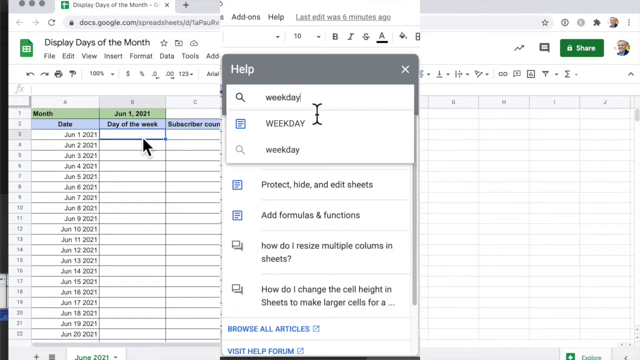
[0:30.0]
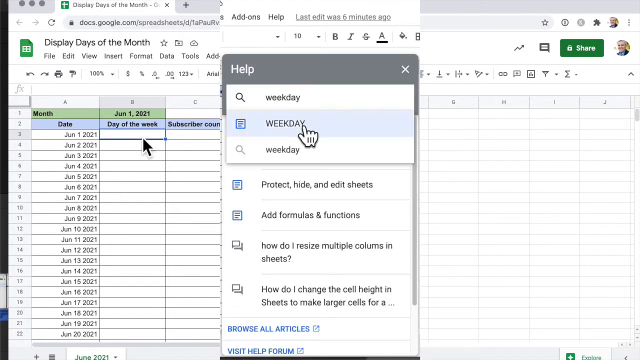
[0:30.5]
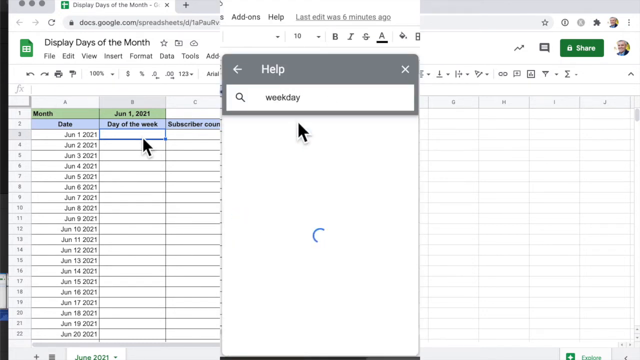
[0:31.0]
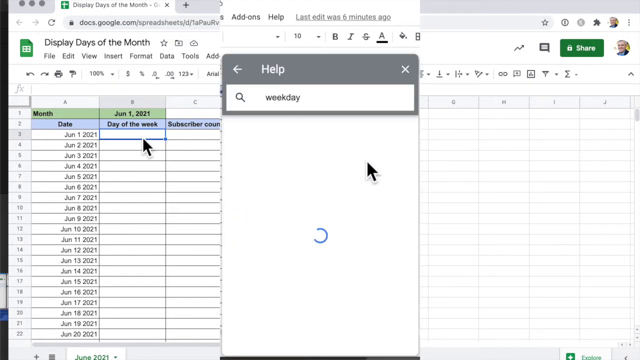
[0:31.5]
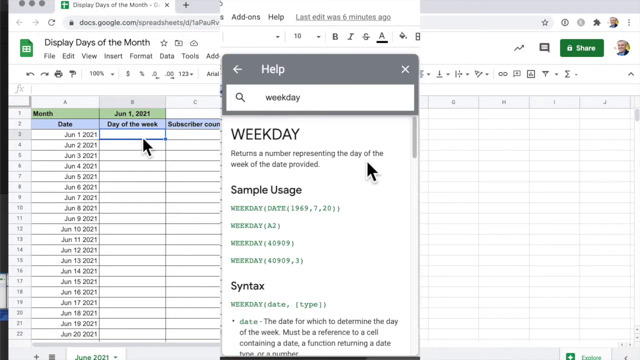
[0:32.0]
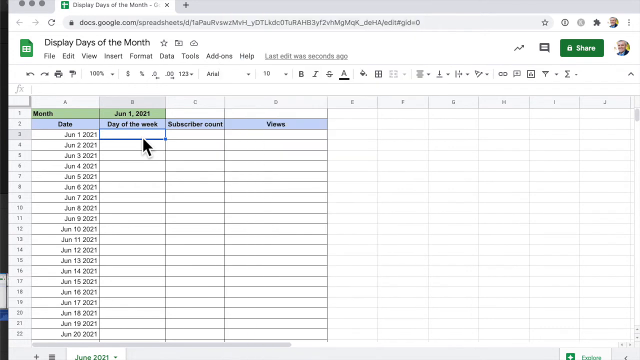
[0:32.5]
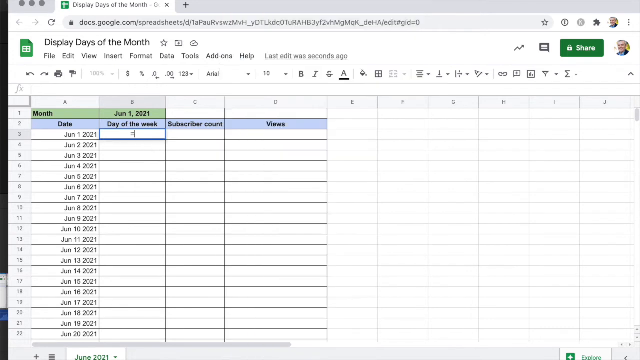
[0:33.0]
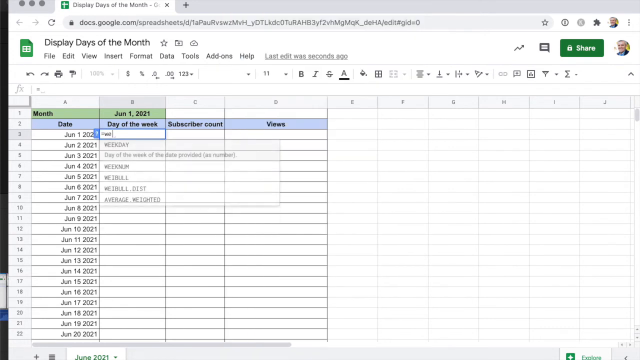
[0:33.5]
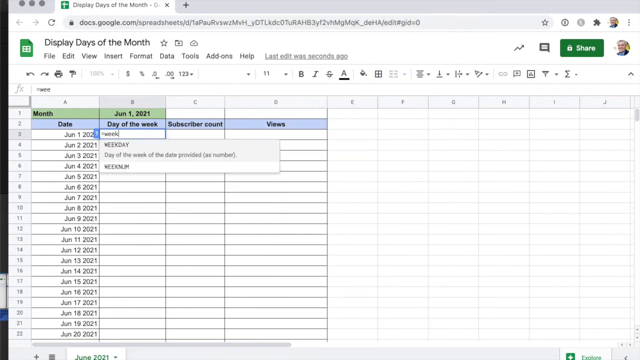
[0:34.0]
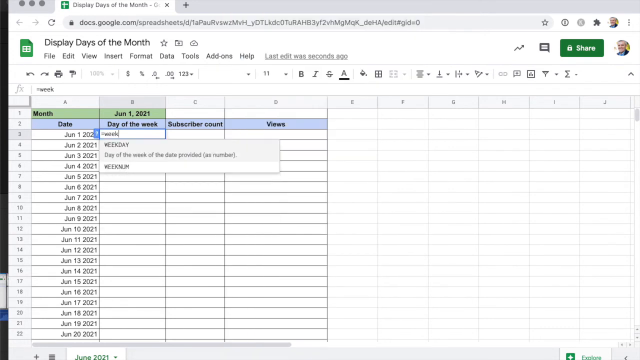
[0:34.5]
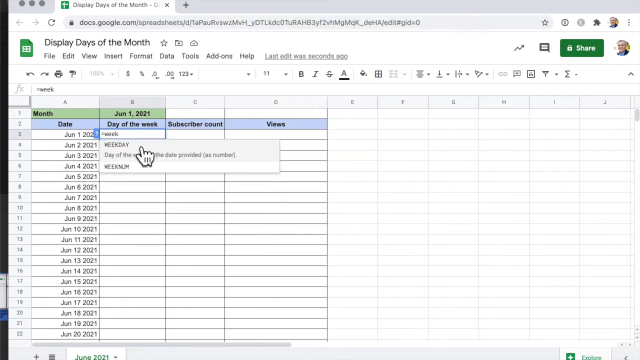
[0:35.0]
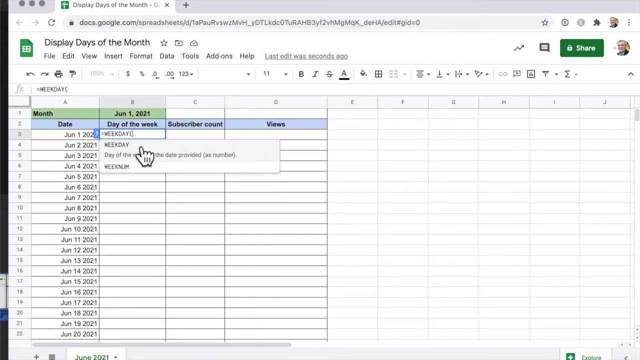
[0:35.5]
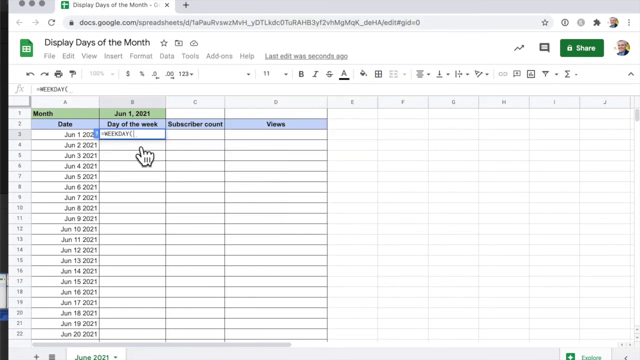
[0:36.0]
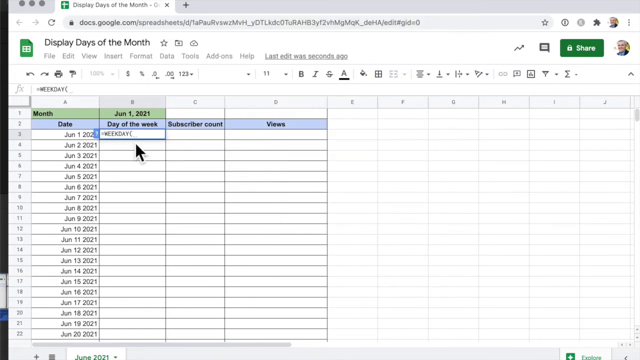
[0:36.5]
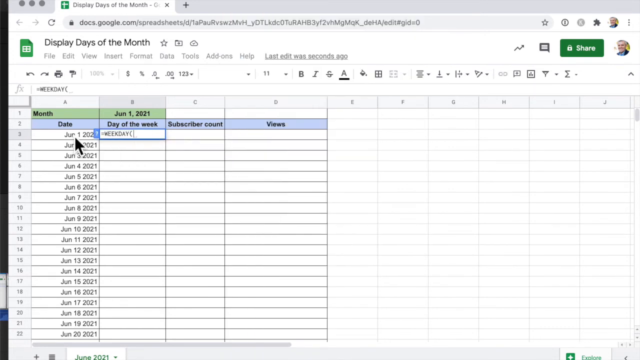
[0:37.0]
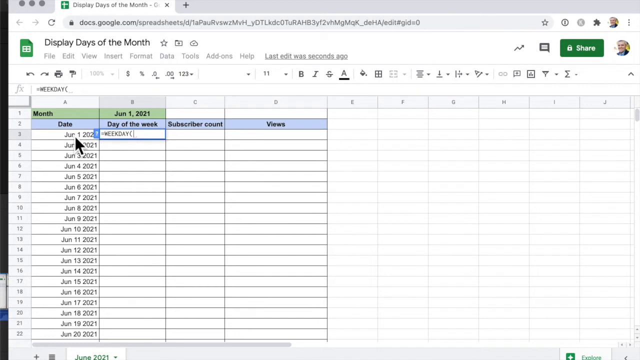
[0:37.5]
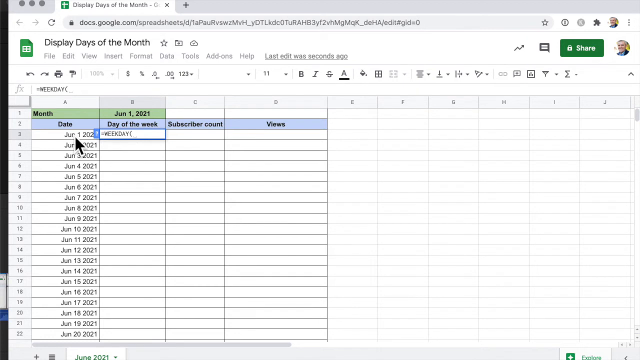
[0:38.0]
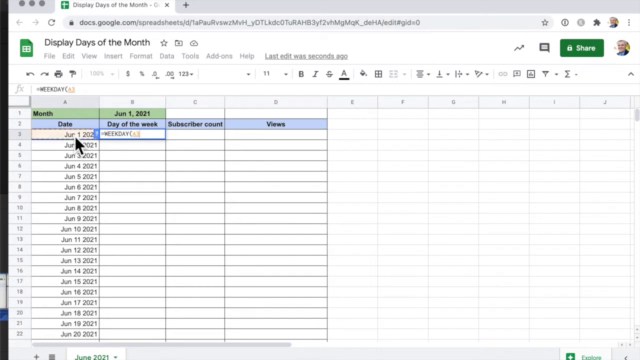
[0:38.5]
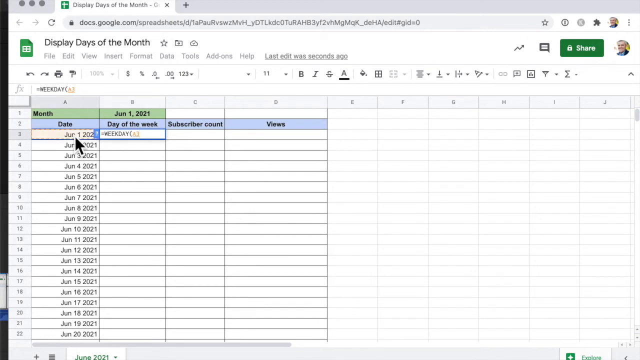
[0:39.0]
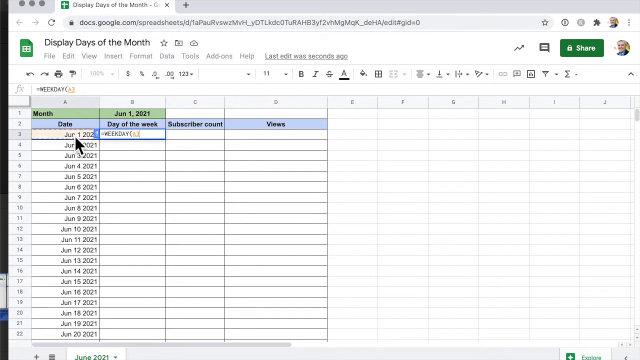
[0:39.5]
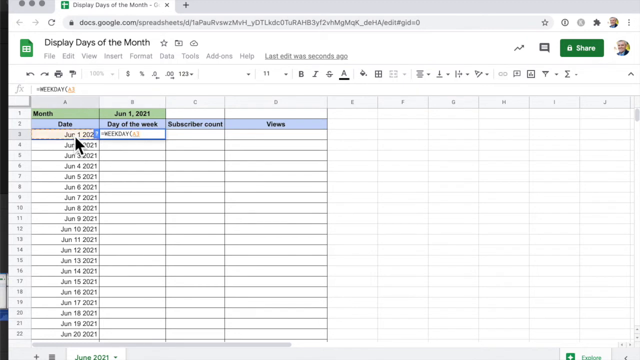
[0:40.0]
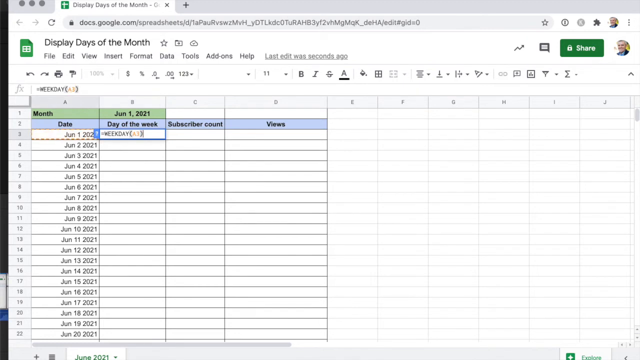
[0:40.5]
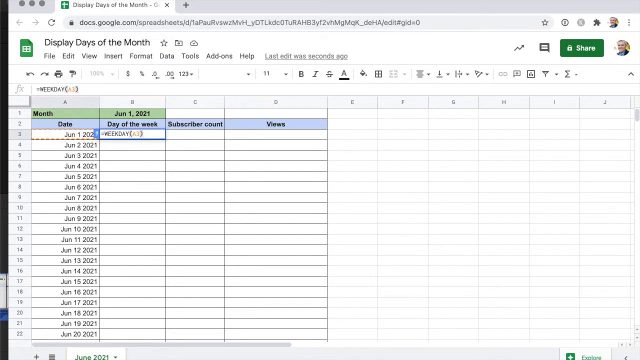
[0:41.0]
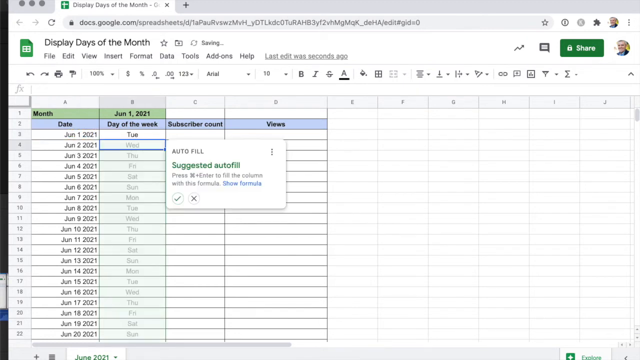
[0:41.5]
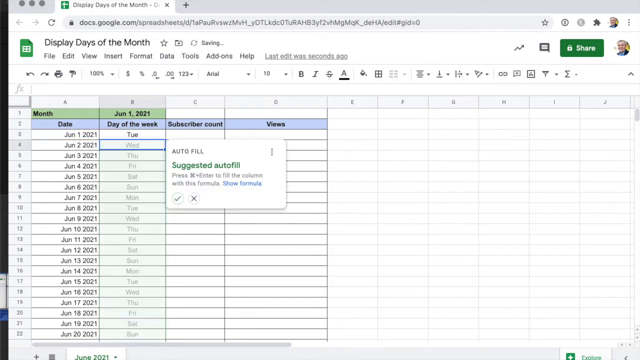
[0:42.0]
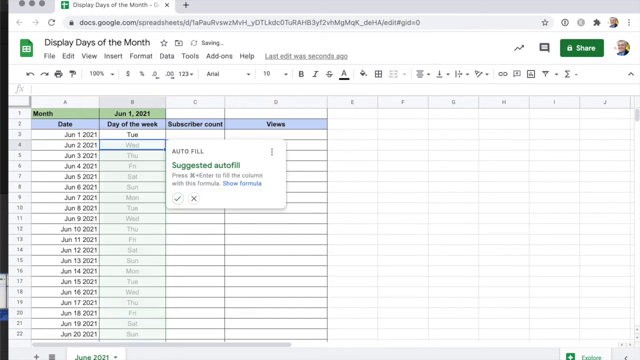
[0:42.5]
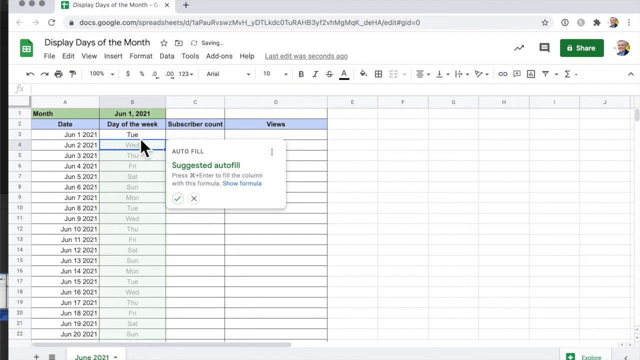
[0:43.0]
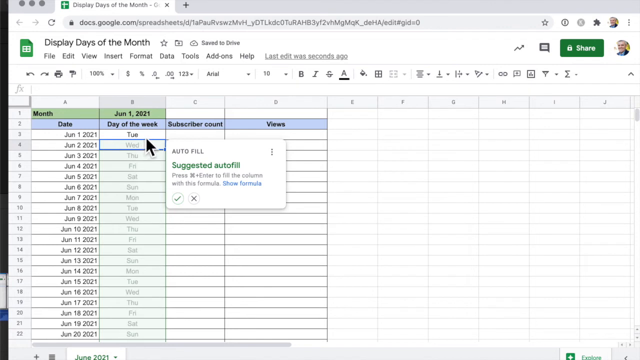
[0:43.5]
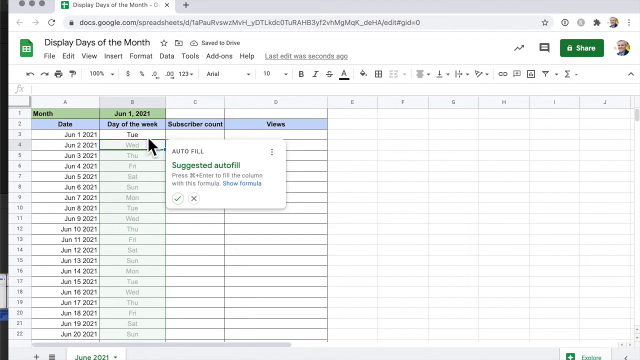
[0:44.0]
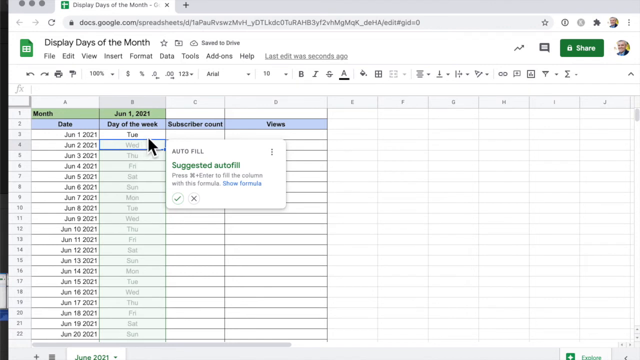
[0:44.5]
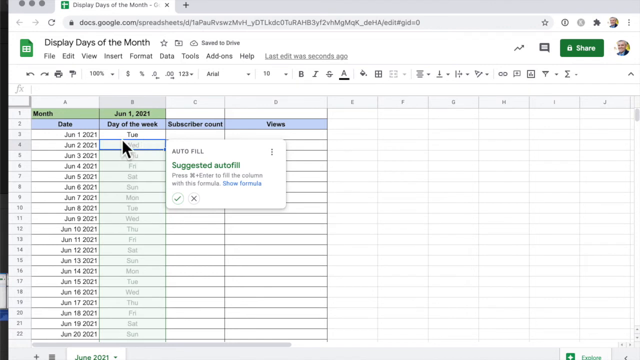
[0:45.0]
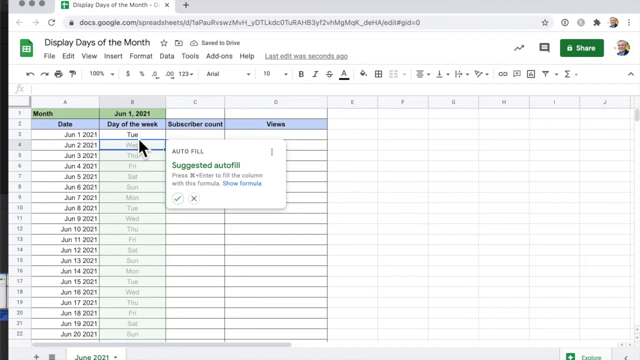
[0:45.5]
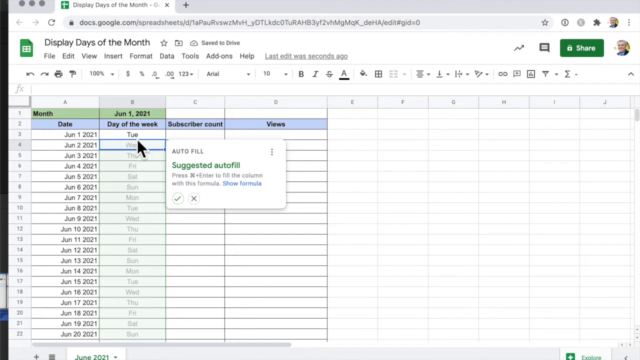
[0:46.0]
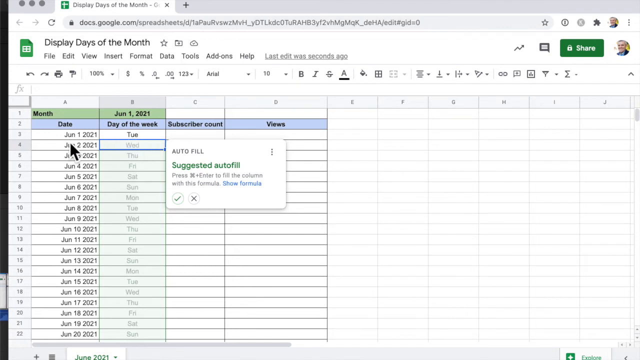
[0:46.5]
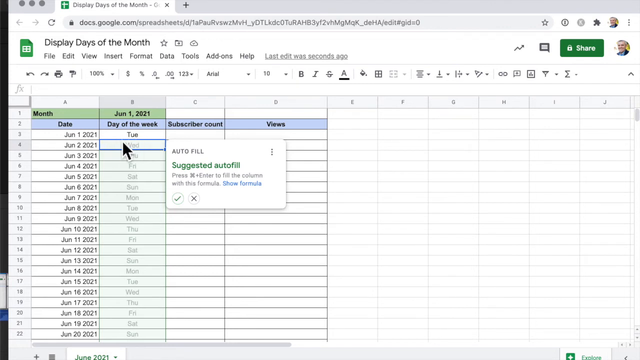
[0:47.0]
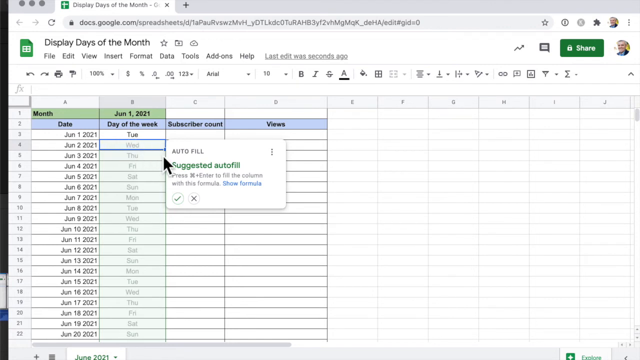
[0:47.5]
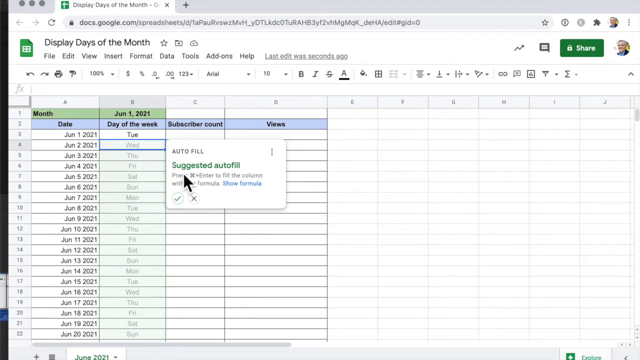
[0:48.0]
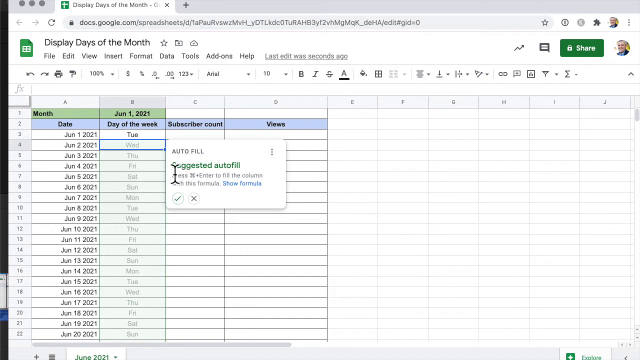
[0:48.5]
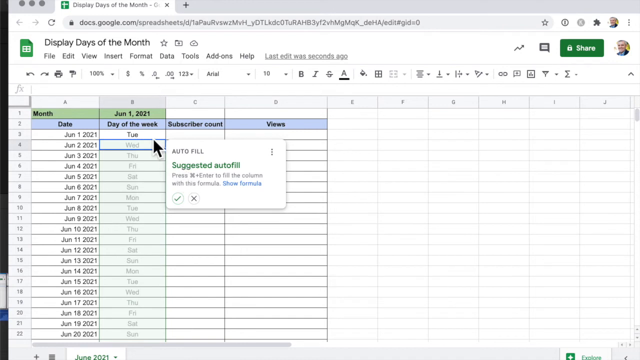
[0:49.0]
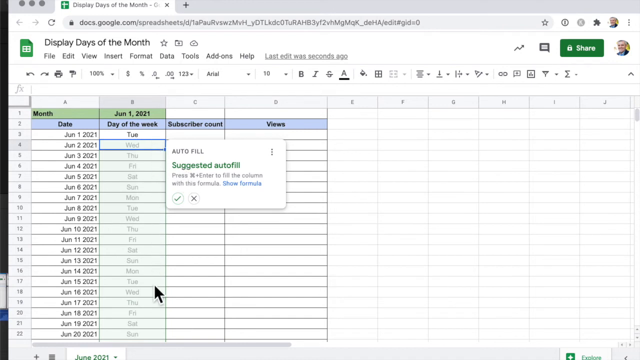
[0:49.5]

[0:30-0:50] After "weekday" is typed, the person searches the help and clicks on an entry that says "weekday." A help page appears with a simple sample command for the weekday function, looking like a script or formula in what appears to be Google Sheets. Using this function, the column next to the date column is auto-filled with days of the week, such as Monday, Tuesday, Wednesday, Thursday or Friday, matching the dates on the left.